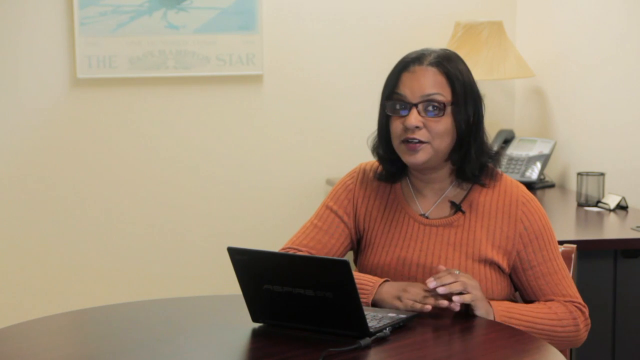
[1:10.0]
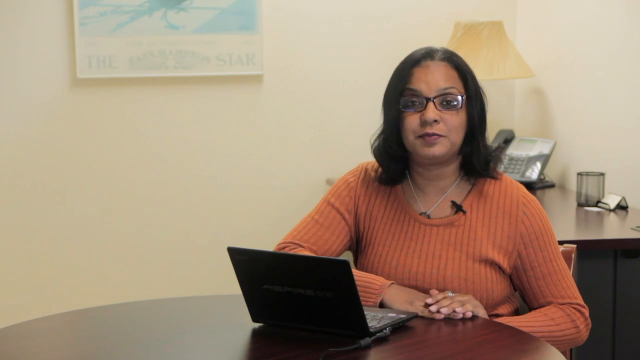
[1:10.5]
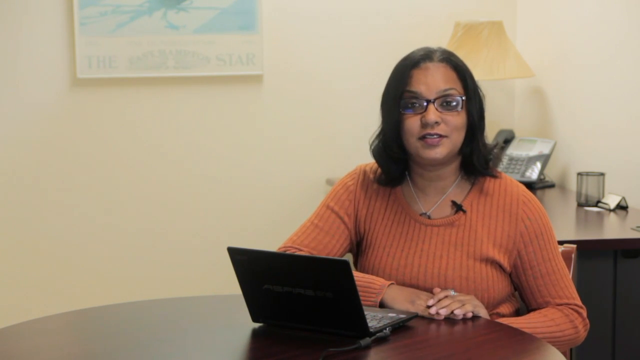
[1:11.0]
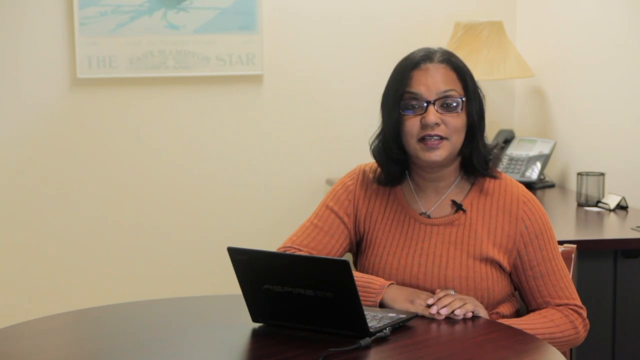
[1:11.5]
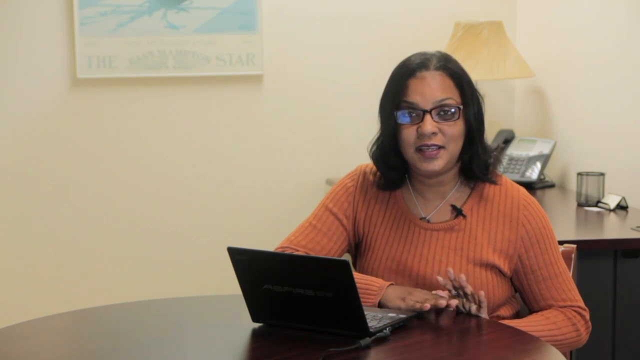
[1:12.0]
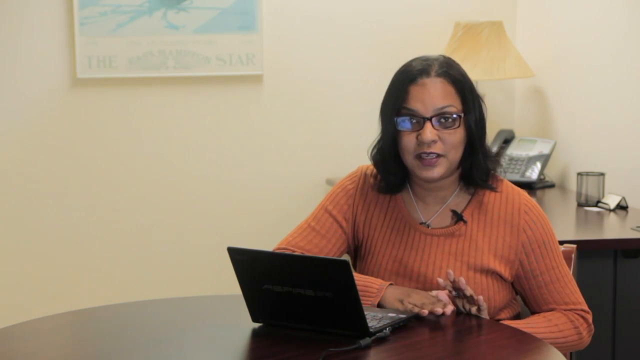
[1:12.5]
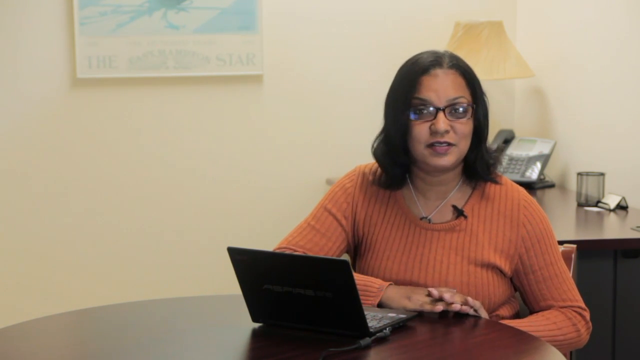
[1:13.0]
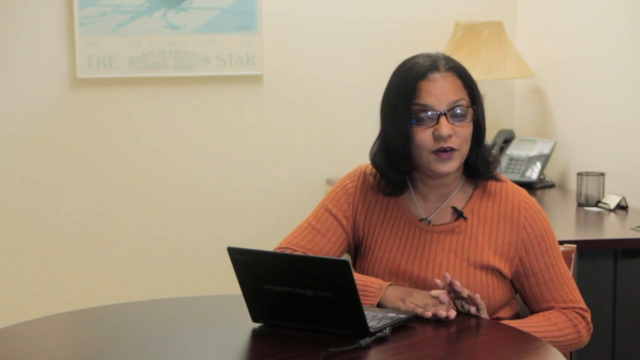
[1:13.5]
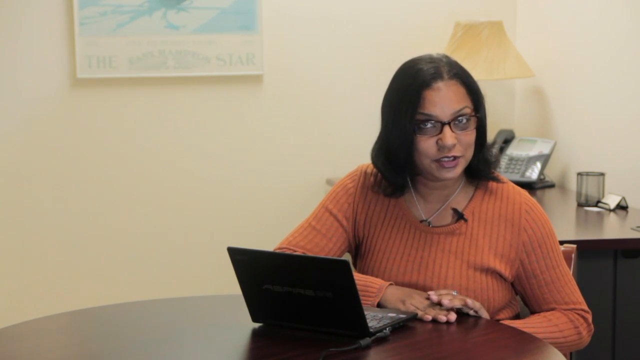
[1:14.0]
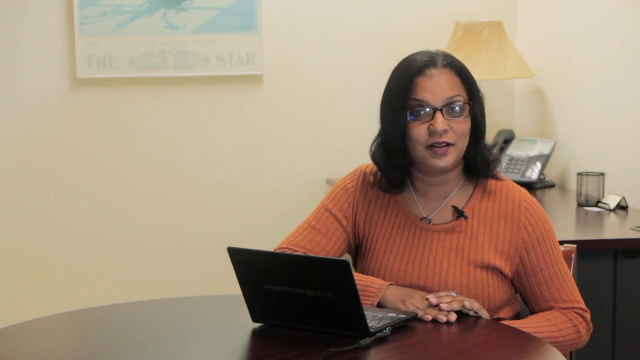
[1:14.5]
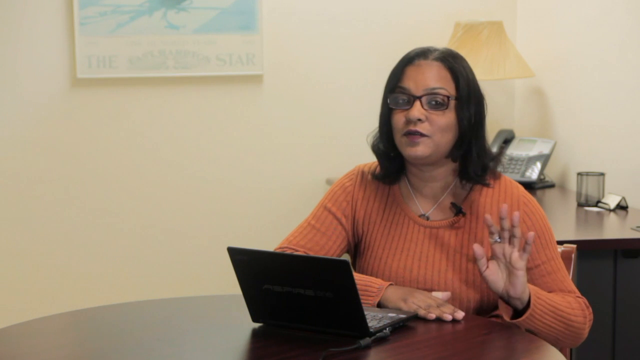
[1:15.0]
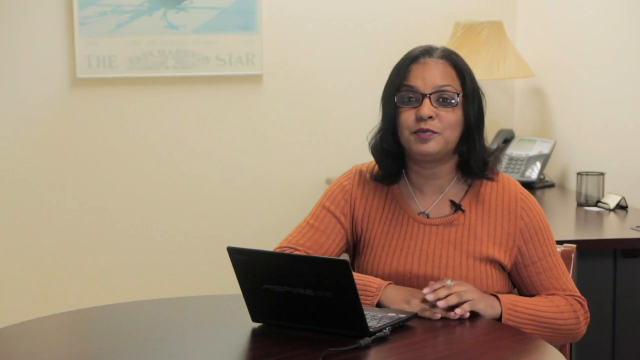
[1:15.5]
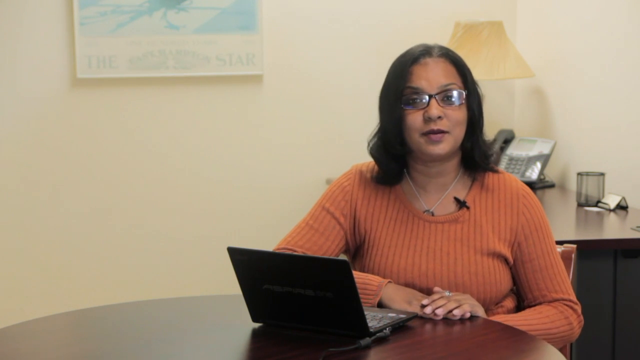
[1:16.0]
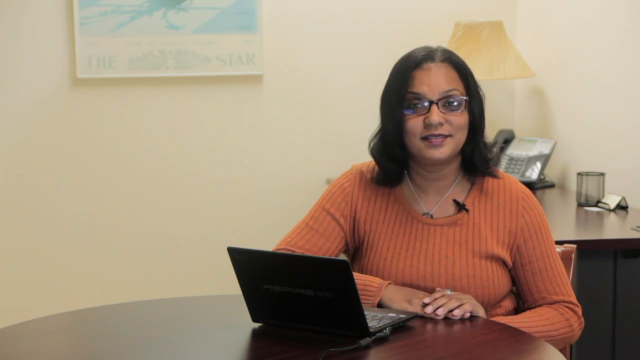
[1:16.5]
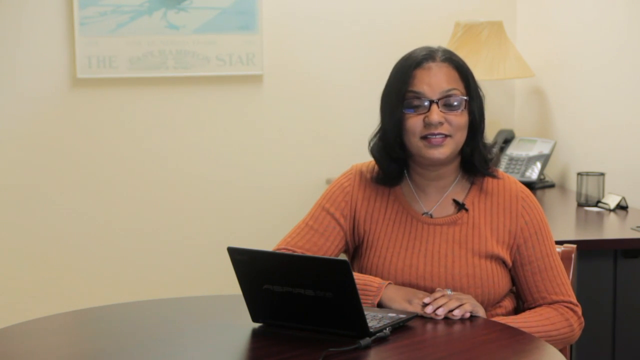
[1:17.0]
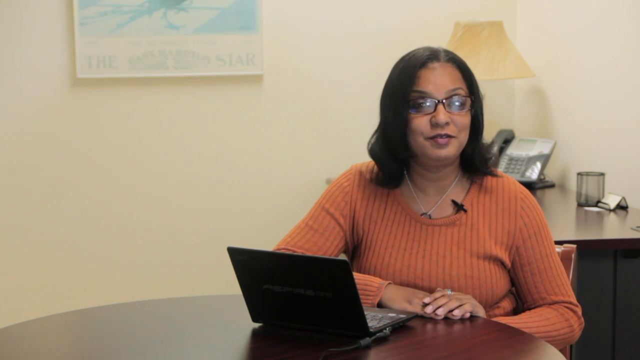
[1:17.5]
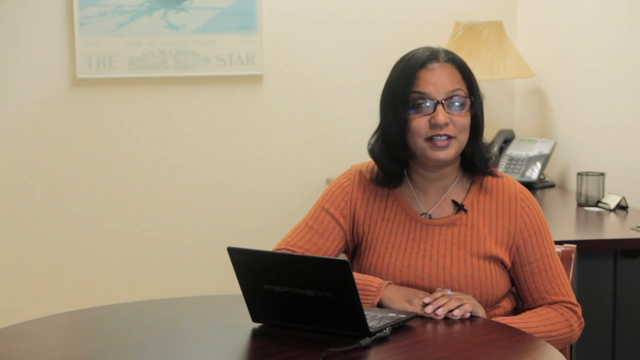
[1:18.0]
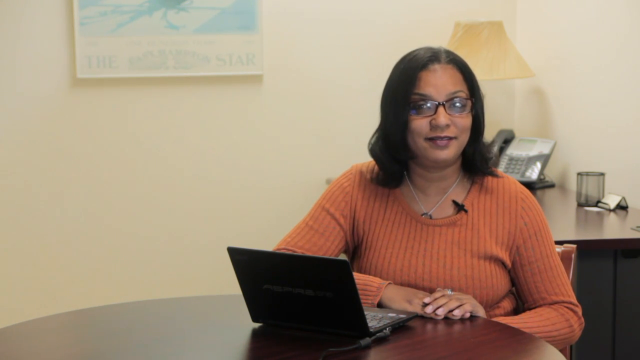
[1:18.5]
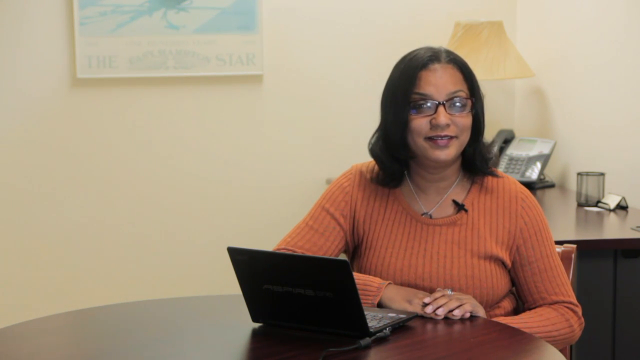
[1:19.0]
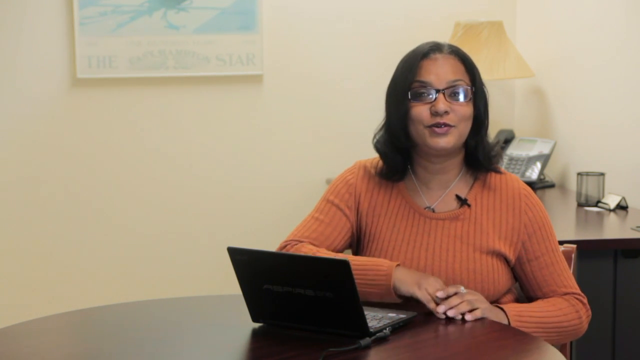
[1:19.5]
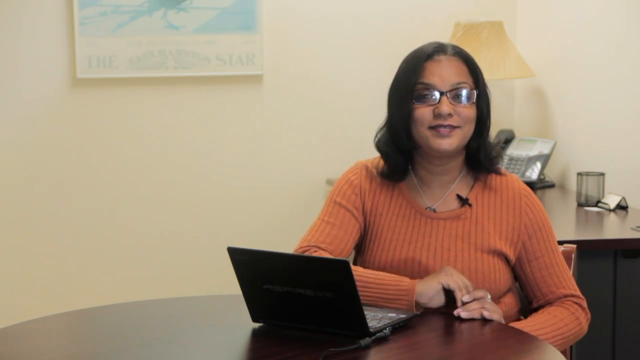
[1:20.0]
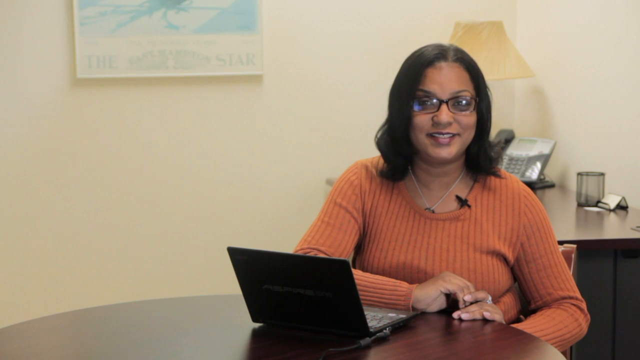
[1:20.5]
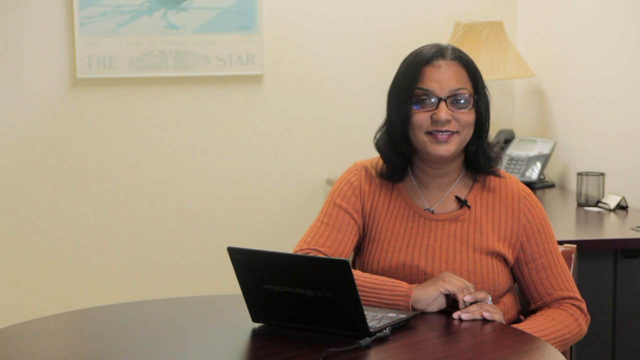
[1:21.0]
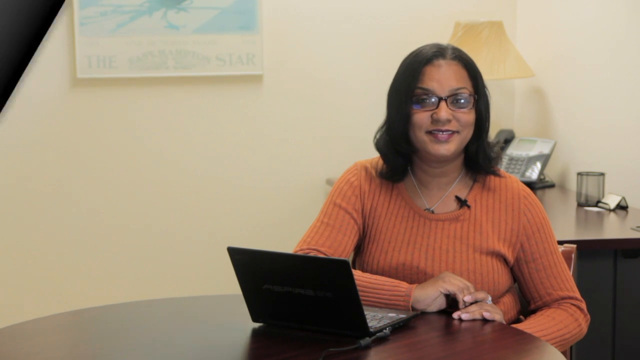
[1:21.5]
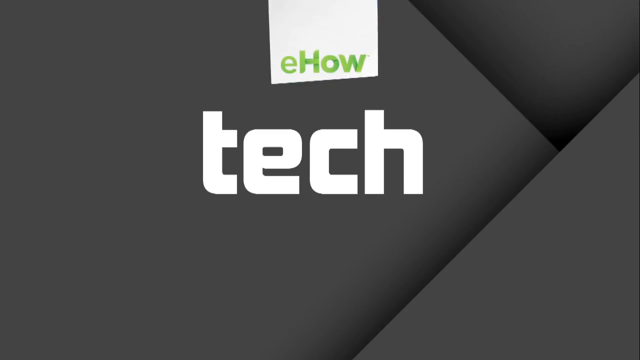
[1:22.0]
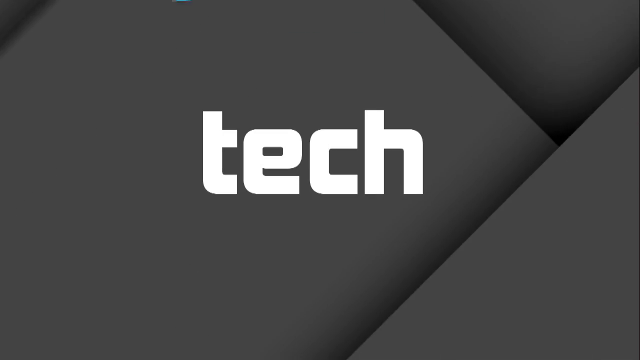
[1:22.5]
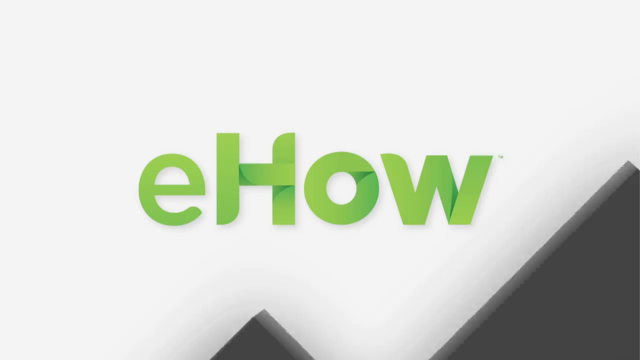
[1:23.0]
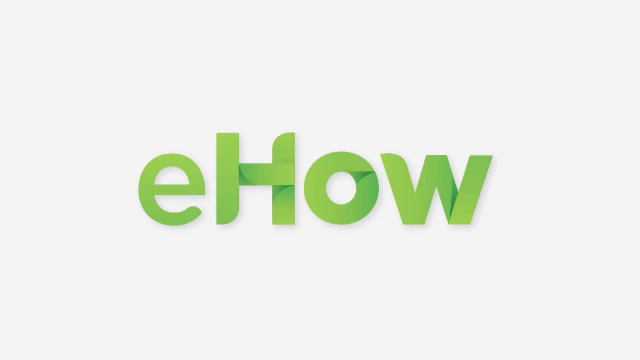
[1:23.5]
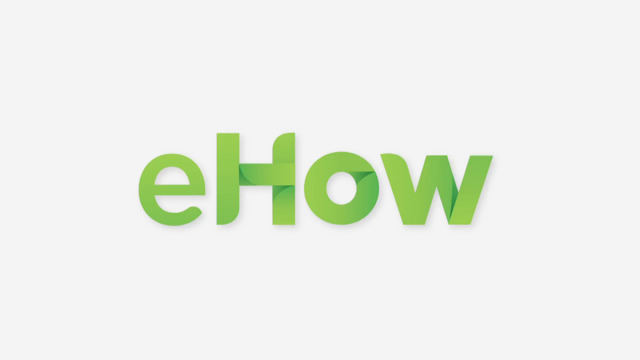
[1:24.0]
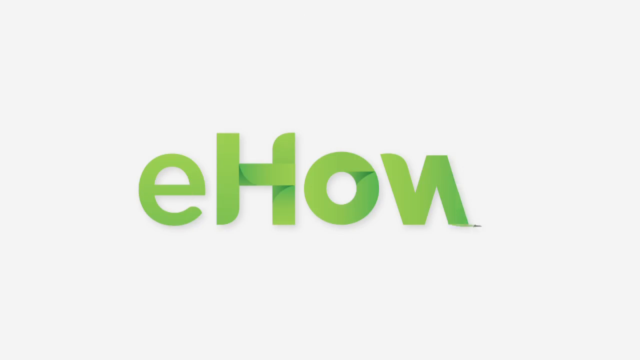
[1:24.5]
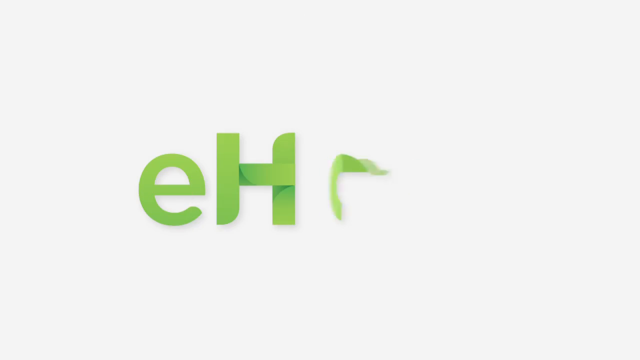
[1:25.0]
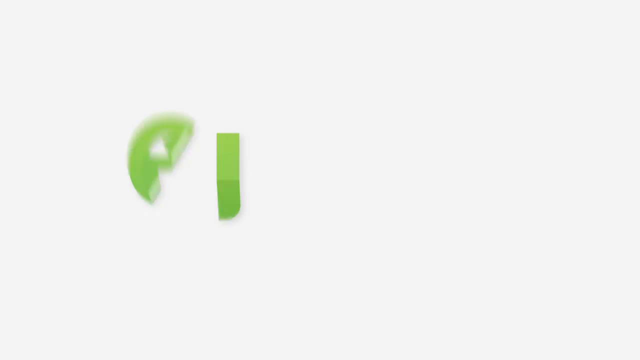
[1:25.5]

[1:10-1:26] A woman sits in a chair, looking at the camera. She is black-skinned, wears glasses, and has short black hair going down to her shoulders. She wears a necklace and a long-sleeve orange sweater. Both her hands are in front of her chest, her right hand resting on the table and her left hand slightly raised. A black laptop is in front of her. Behind her, the room's walls are cream-colored, with a poster at the top left of the frame, a lamp behind the woman, and a telephone on a countertop. She puts her left hand over her right hand, making slight hand movements as she speaks and raising her left hand slightly, while keeping a very neutral expression. The scene then changes one last time to a sort of black background animation, with the word "tech" in big bold white letters in the middle and, in a sort of white square box at the top middle above it, the letters "ehow."